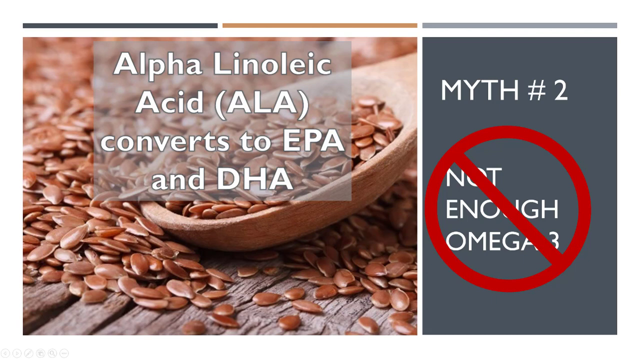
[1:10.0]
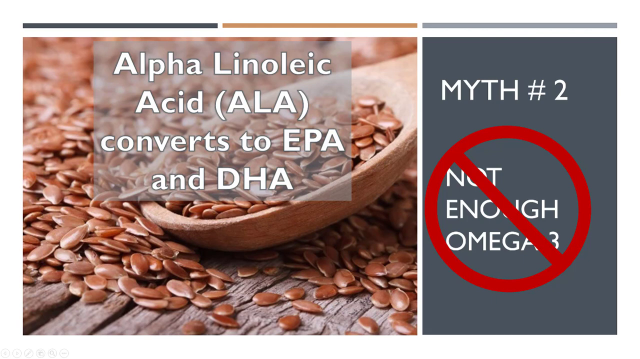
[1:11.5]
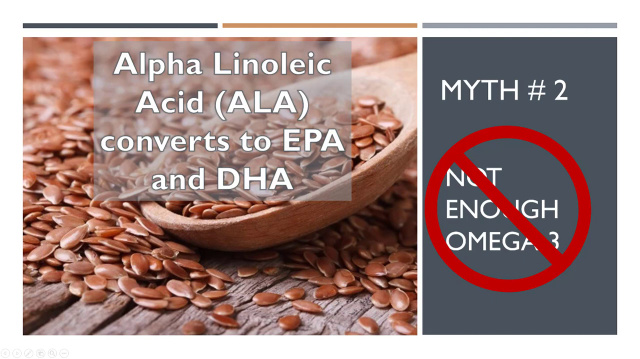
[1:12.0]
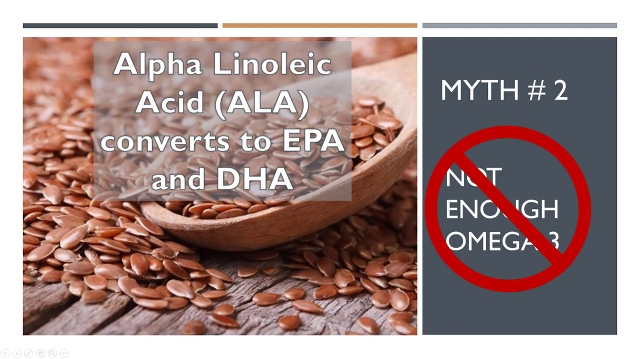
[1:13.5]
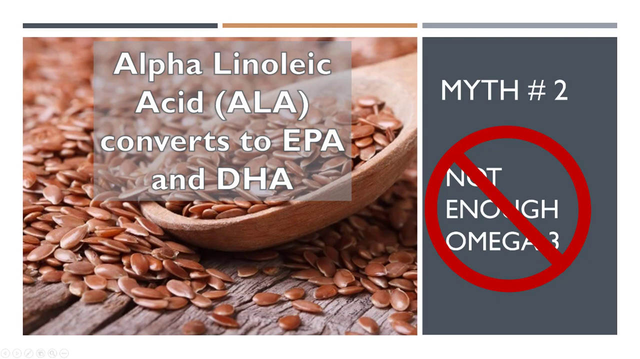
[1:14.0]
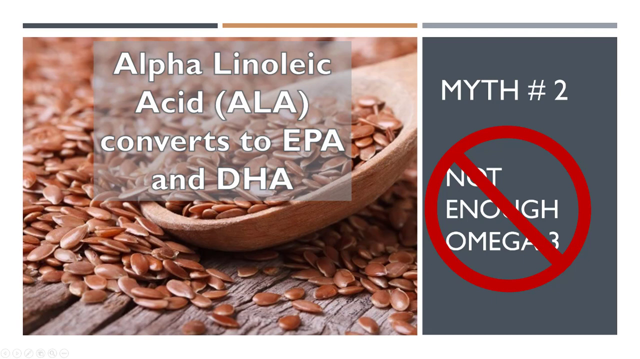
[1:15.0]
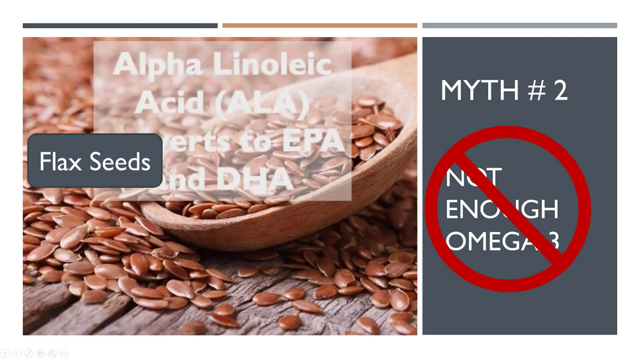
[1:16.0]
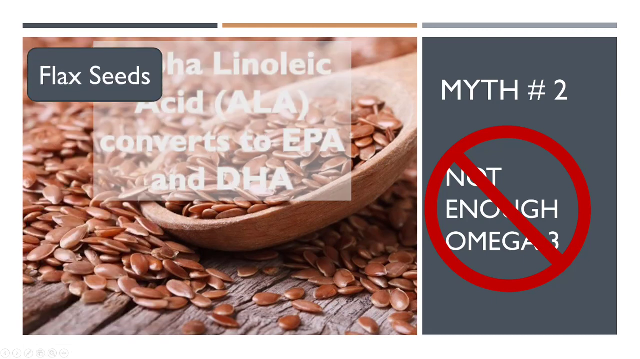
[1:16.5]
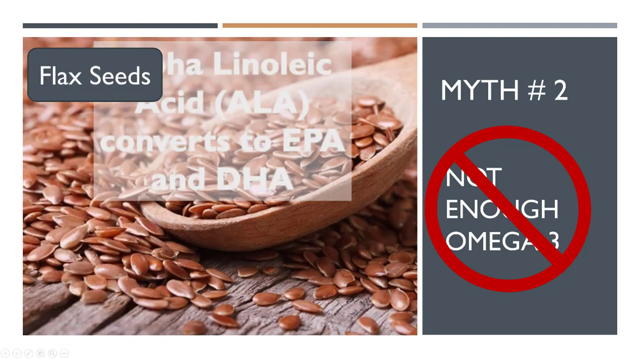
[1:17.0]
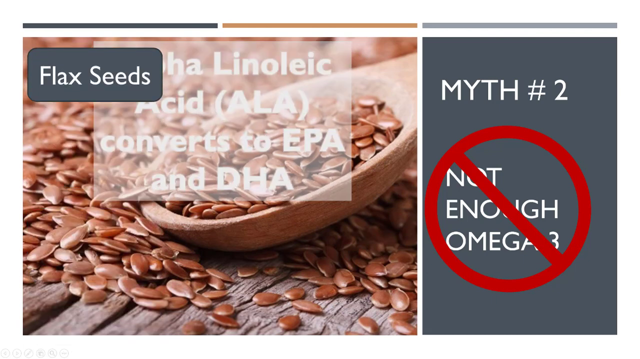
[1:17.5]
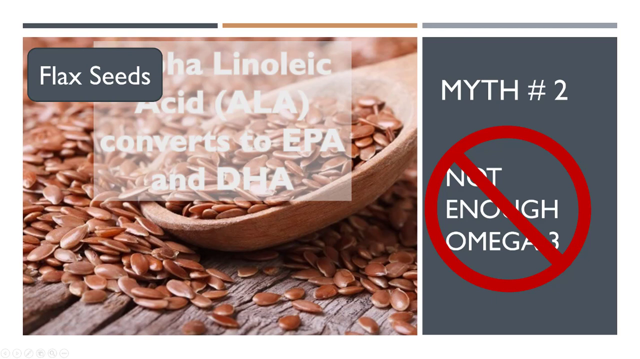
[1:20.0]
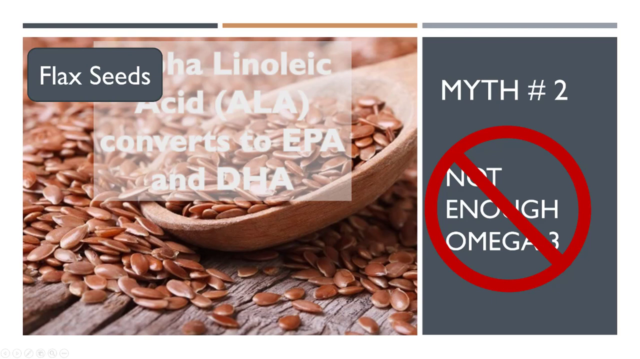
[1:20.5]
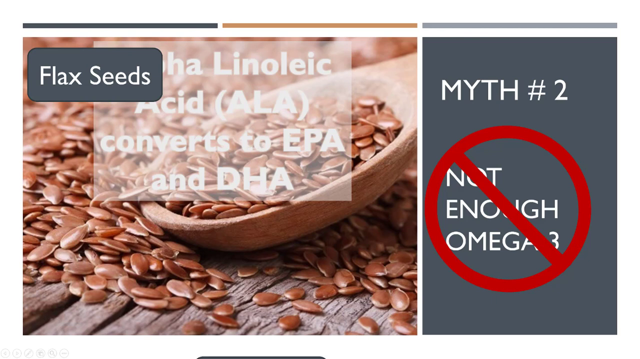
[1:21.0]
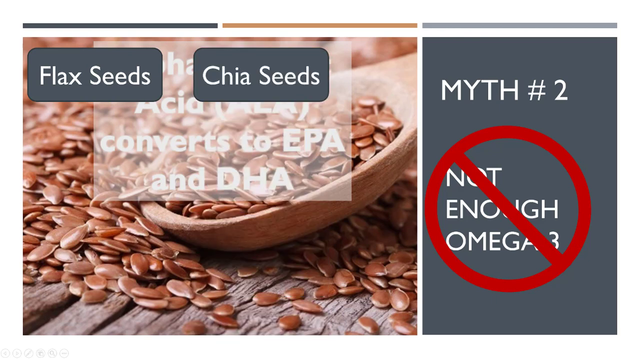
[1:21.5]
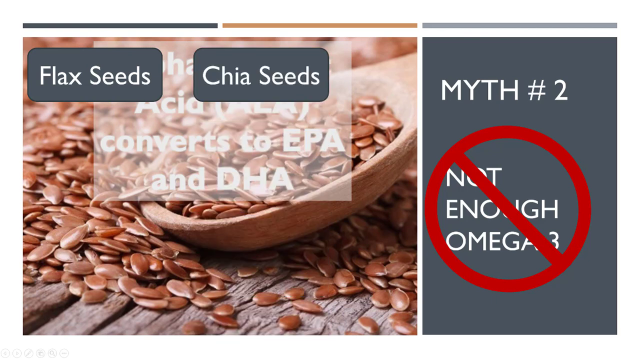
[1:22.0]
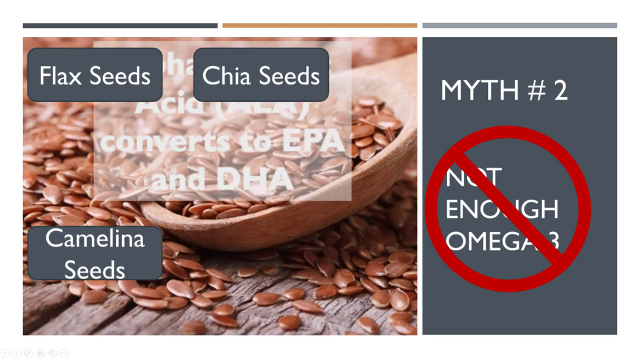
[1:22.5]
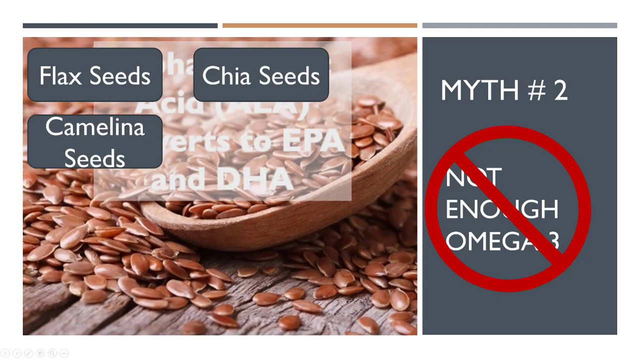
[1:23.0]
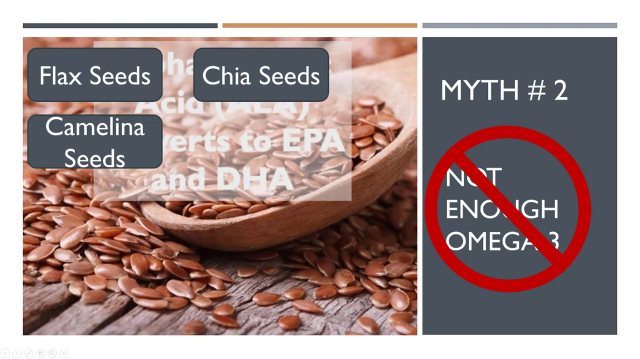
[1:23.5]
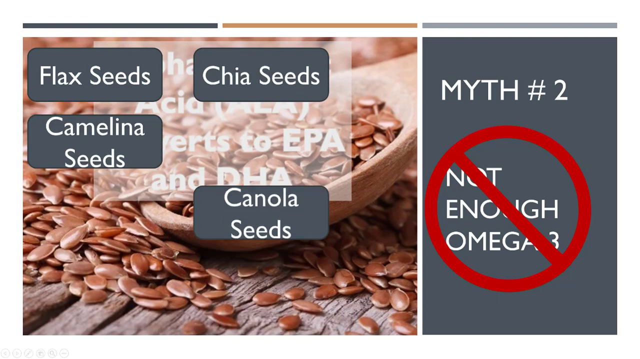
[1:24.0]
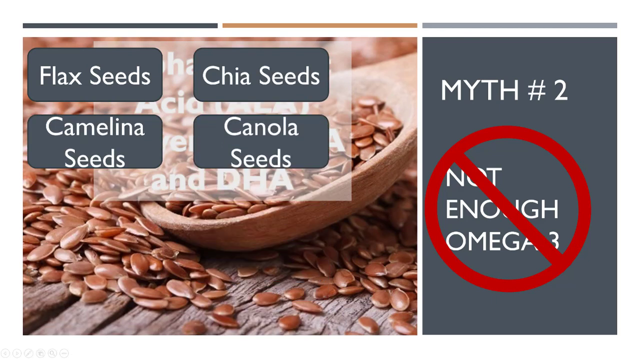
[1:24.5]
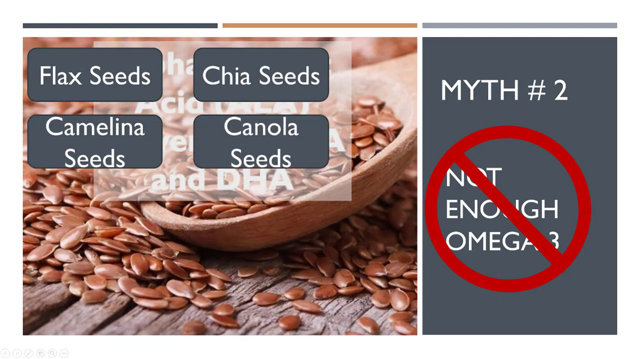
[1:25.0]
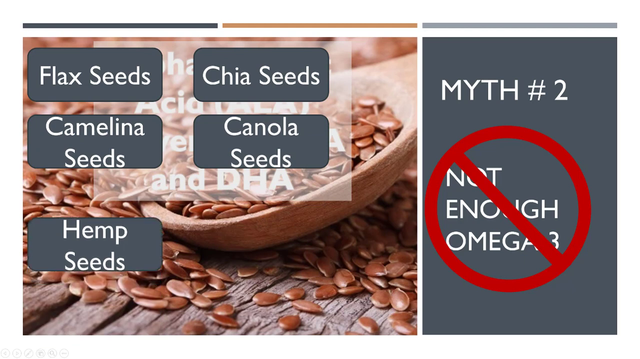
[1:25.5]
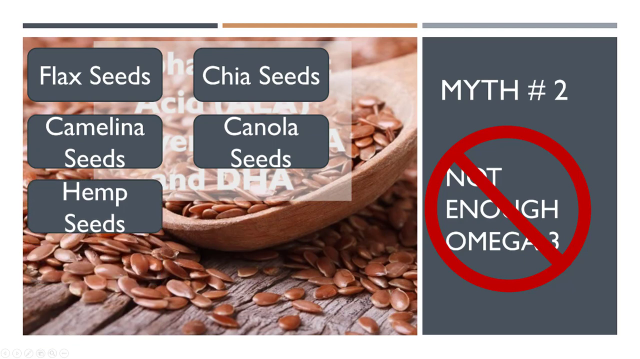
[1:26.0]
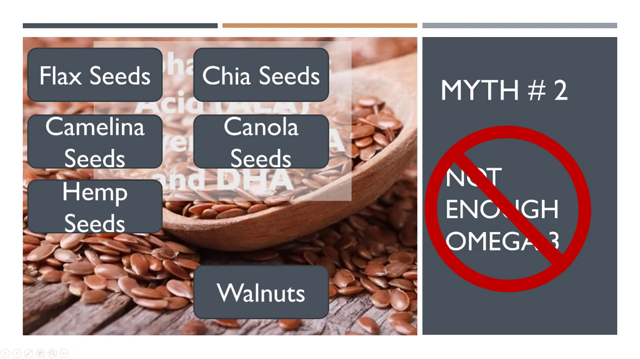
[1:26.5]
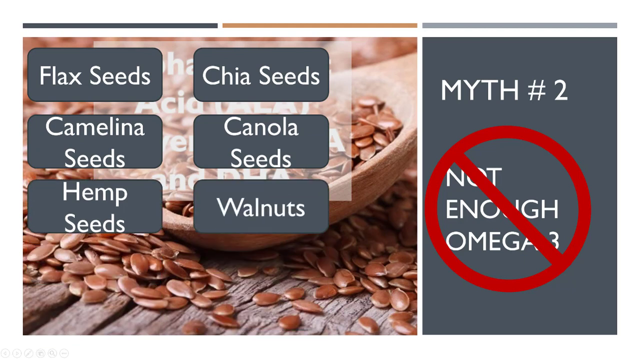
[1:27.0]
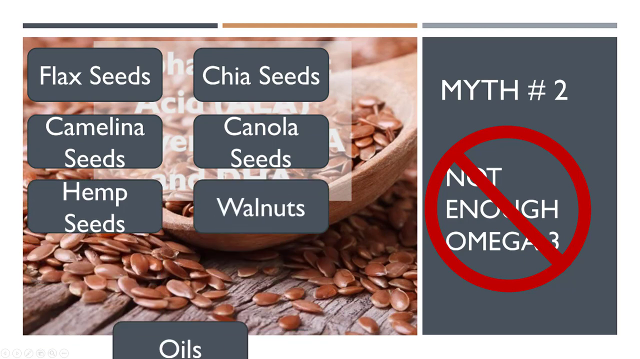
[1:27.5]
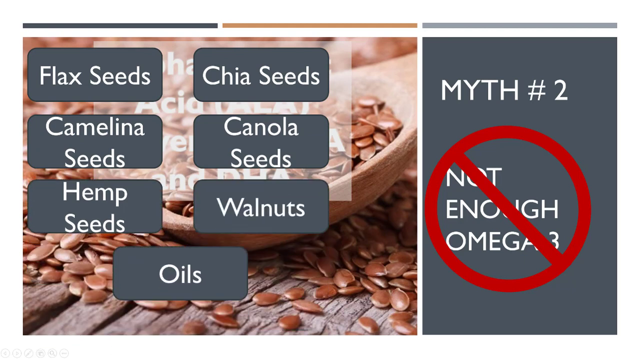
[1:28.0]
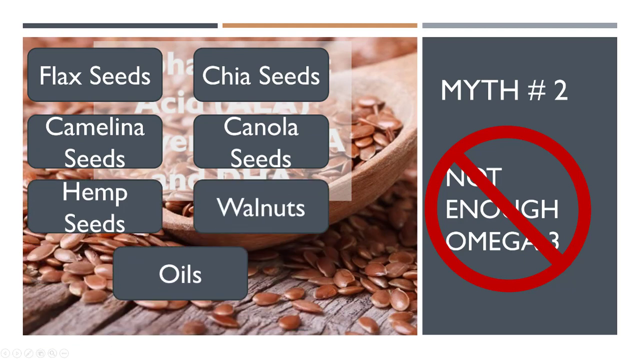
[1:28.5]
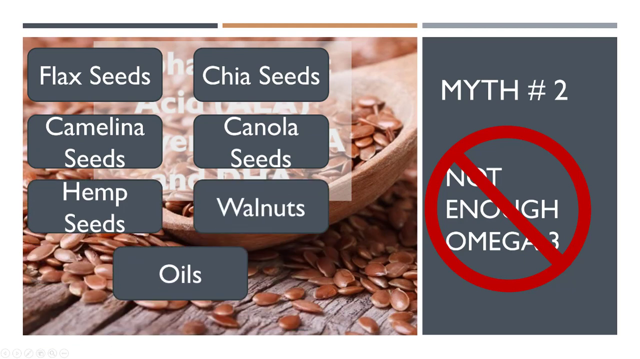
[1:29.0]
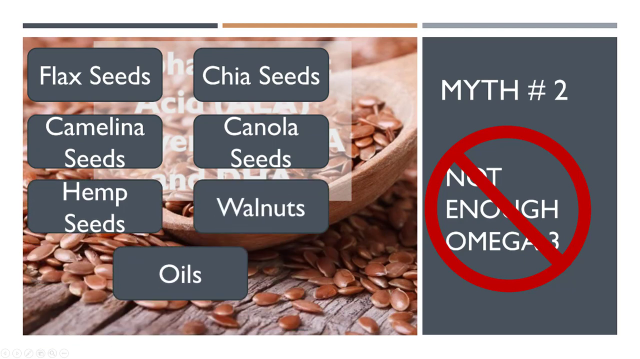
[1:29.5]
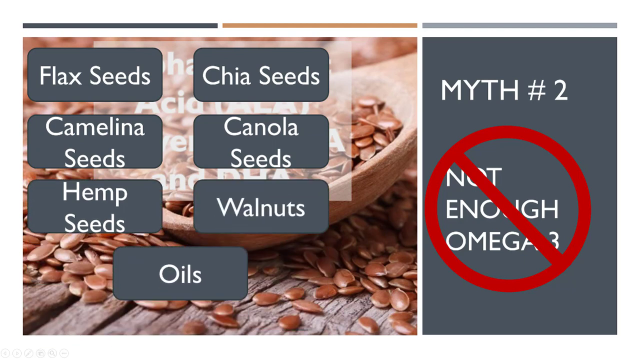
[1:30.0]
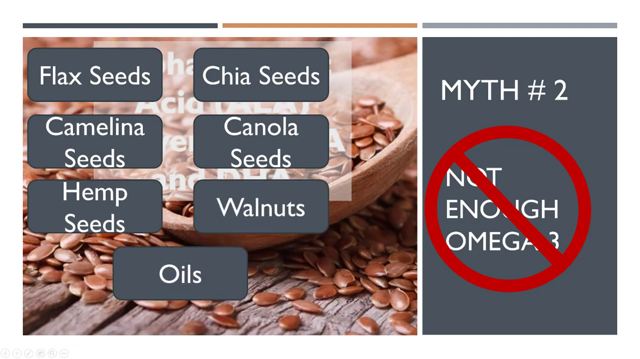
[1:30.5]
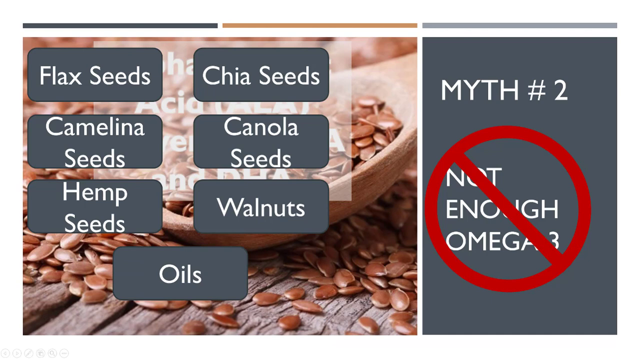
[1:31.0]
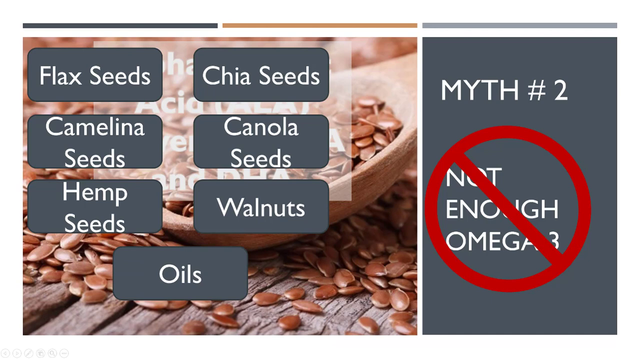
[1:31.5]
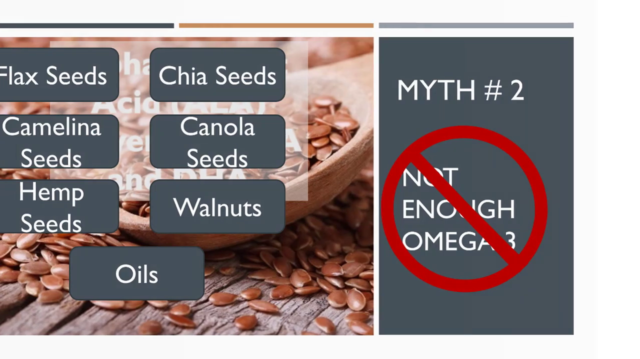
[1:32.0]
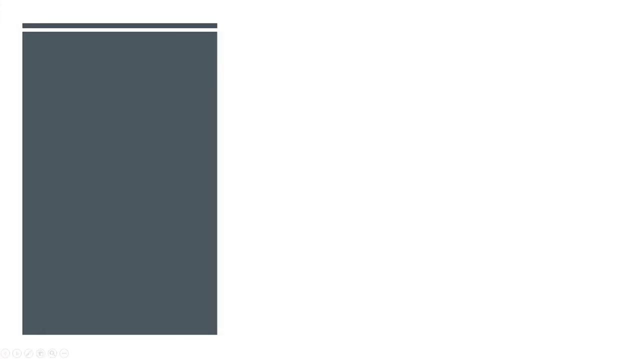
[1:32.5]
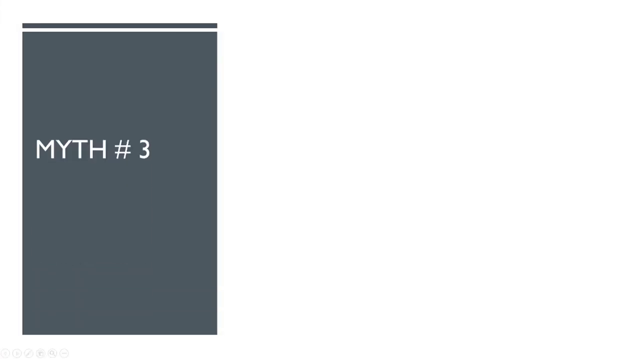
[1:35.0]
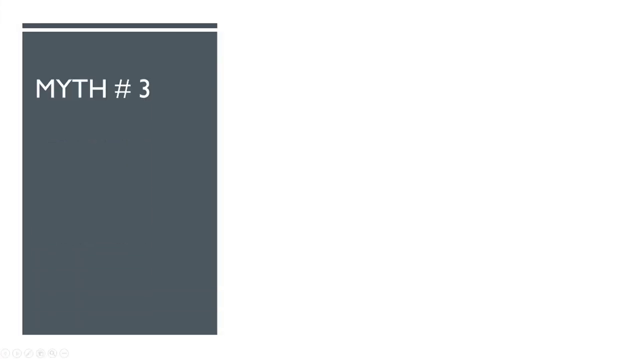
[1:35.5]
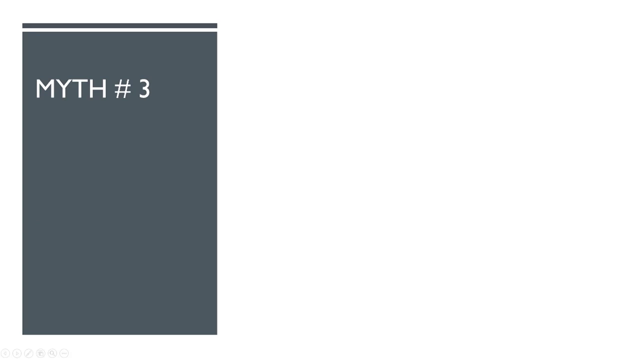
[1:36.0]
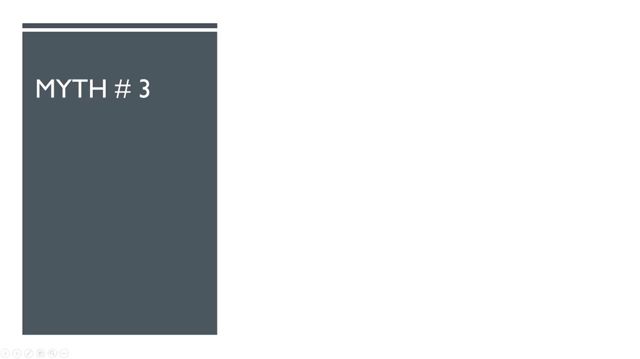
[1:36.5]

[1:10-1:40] The text about alpha-linoleic acid converting to EPA and DHA fades to white as another text box pops up near its top left reading "flax seeds." Similarly colored and sized text boxes continue to pop up, covering the majority of the other box, for chia seeds, camelina seeds, canola seeds, hemp seeds, walnuts, and oils. Another transition wipes away all the previous pictures and text, returning to the simpler style with a plain white background on the left side and a grey column on the far right, where text pops up reading "myth number three."